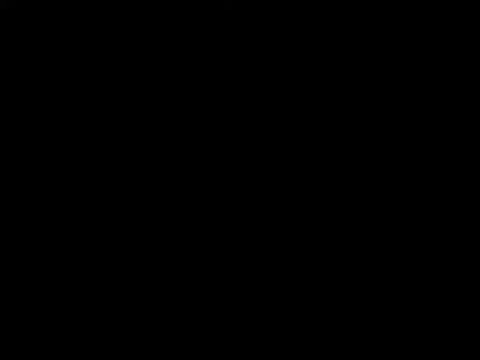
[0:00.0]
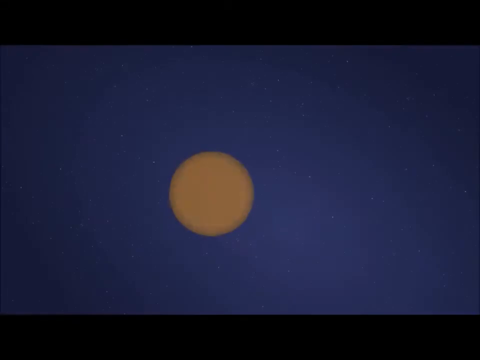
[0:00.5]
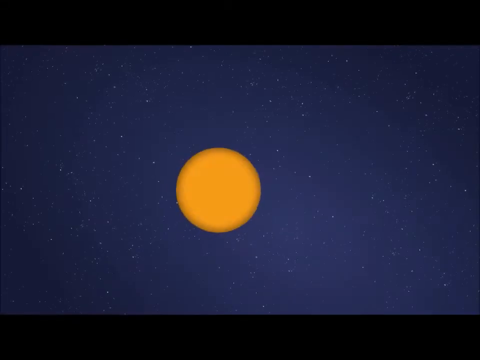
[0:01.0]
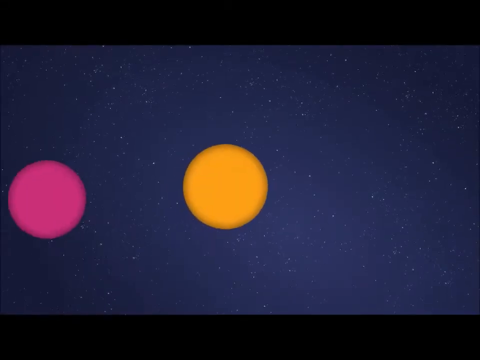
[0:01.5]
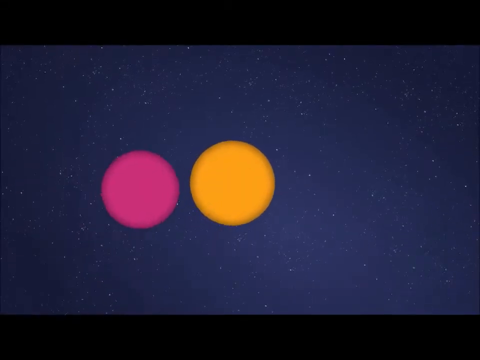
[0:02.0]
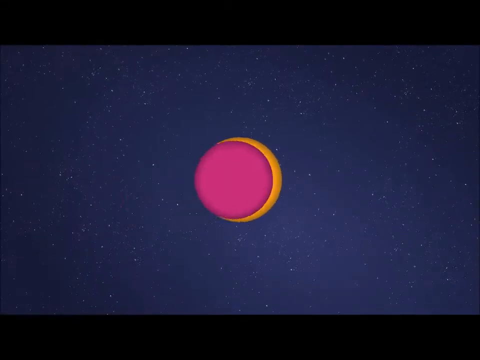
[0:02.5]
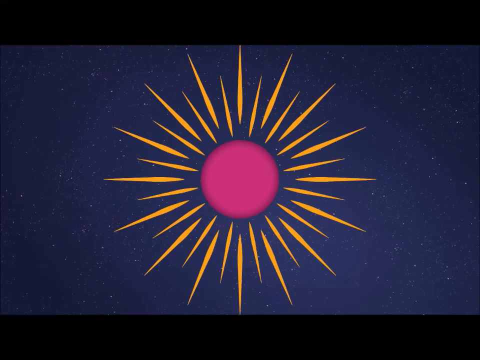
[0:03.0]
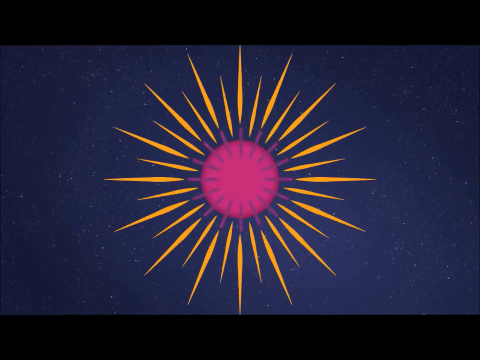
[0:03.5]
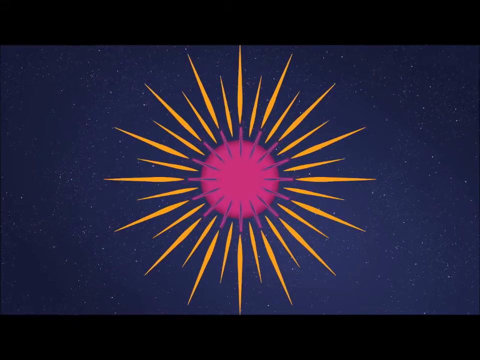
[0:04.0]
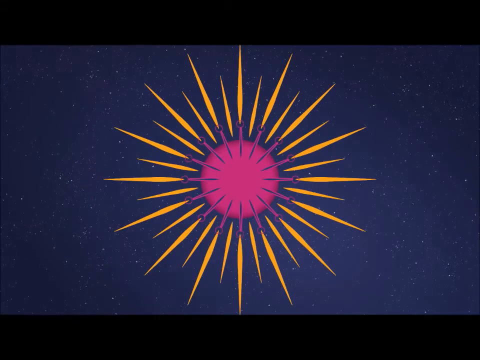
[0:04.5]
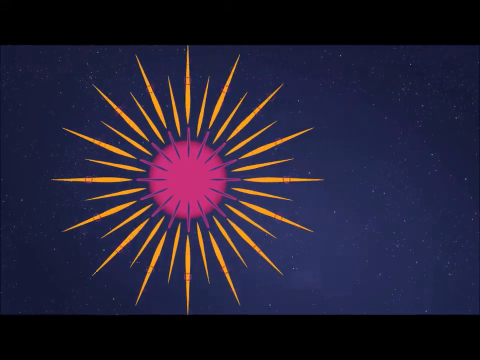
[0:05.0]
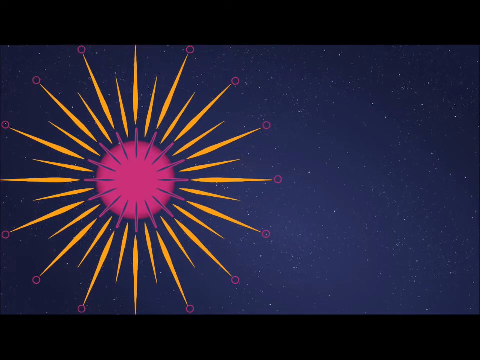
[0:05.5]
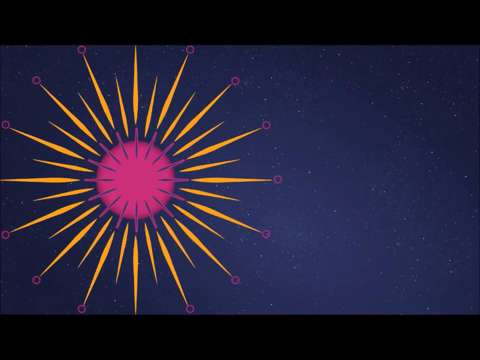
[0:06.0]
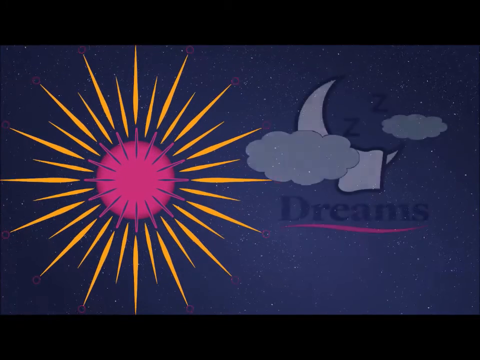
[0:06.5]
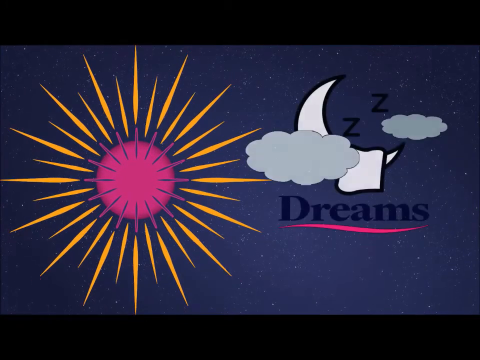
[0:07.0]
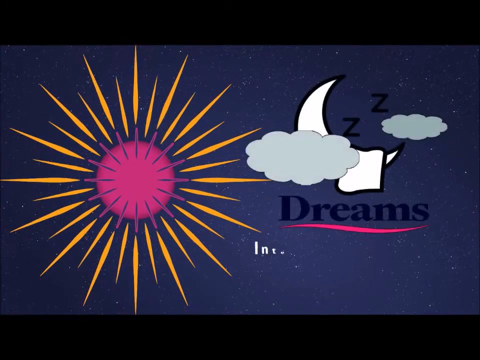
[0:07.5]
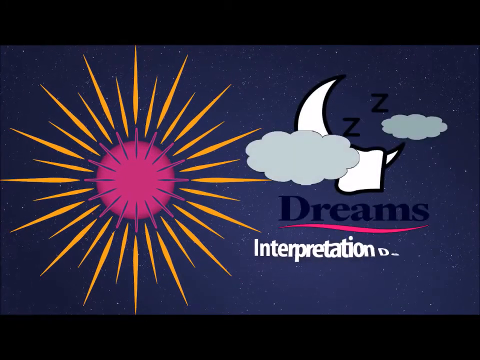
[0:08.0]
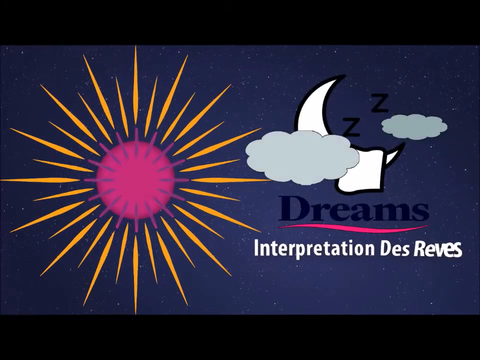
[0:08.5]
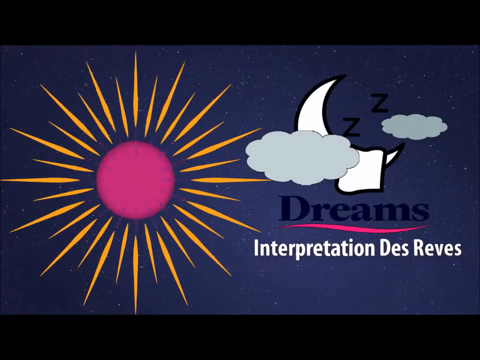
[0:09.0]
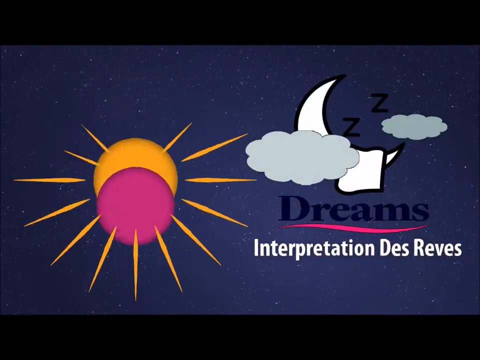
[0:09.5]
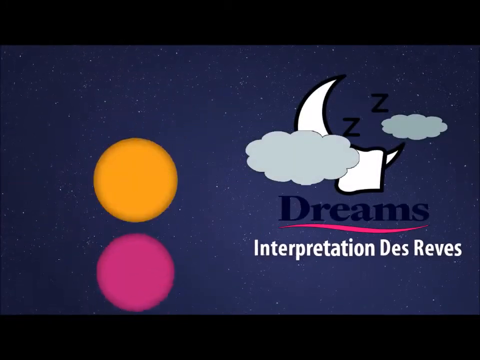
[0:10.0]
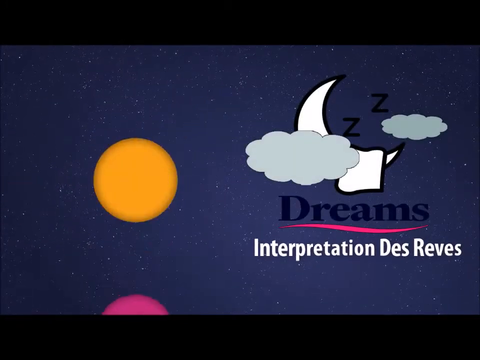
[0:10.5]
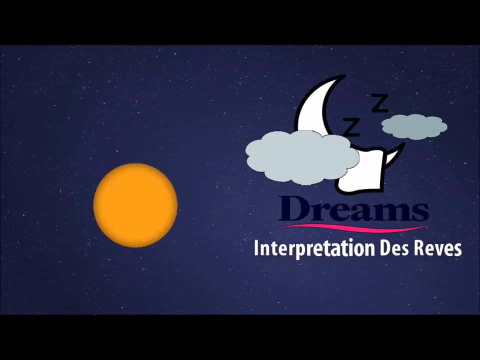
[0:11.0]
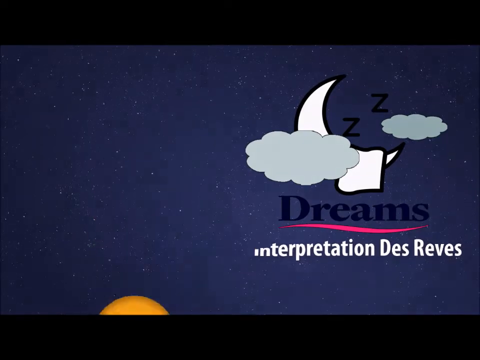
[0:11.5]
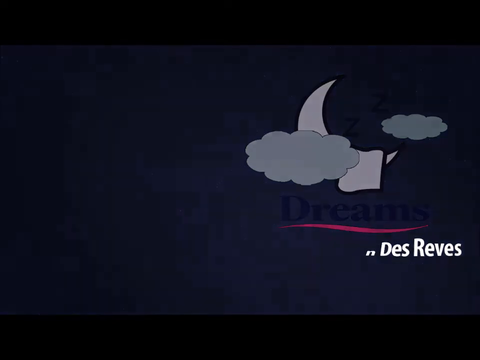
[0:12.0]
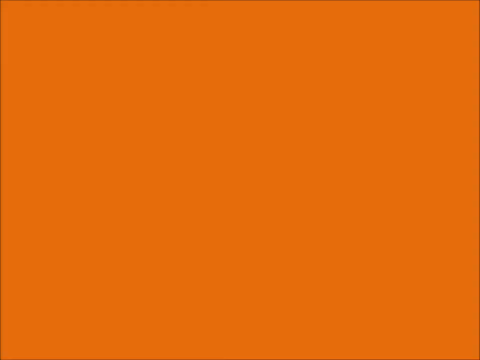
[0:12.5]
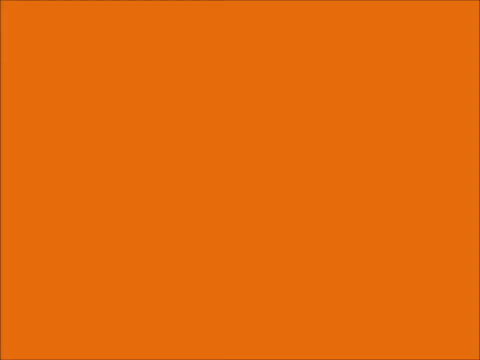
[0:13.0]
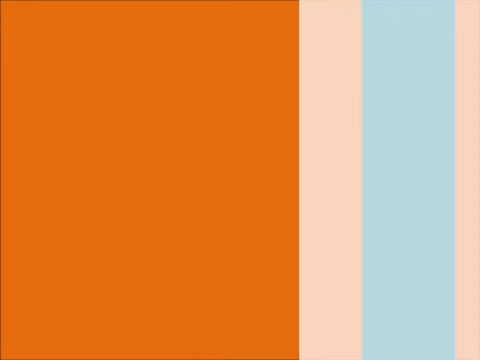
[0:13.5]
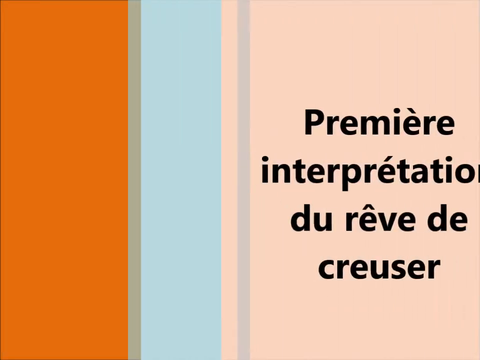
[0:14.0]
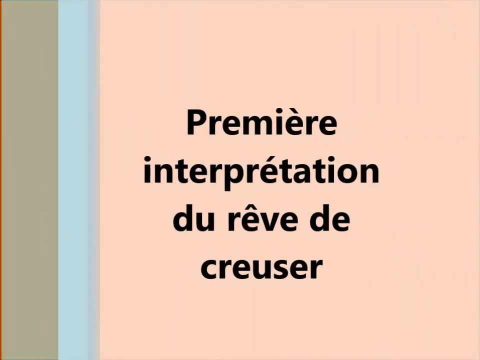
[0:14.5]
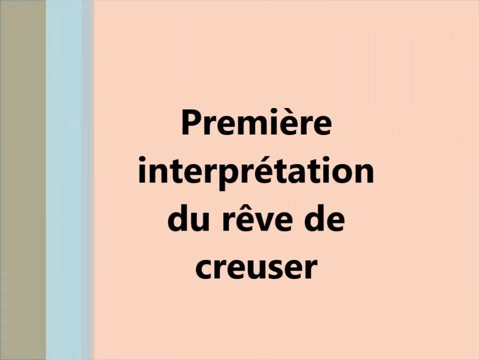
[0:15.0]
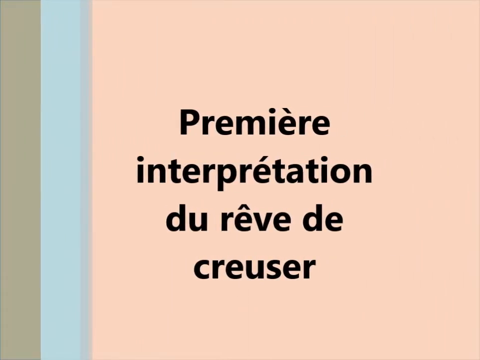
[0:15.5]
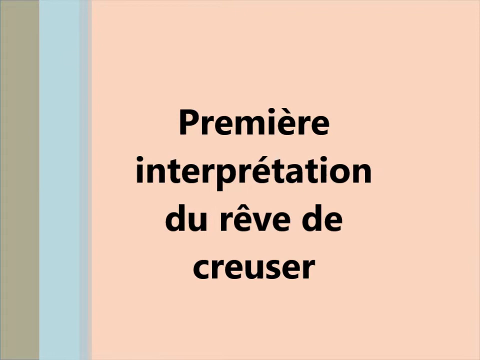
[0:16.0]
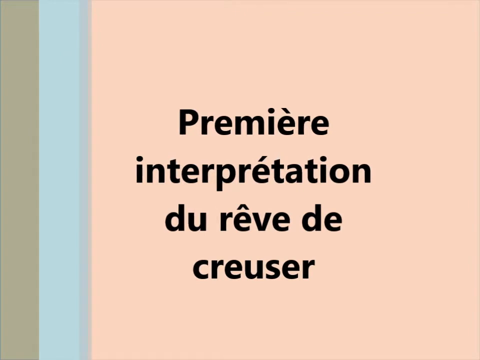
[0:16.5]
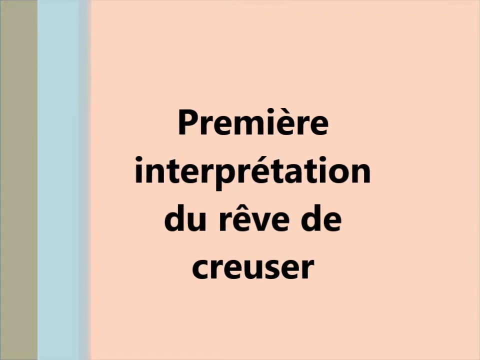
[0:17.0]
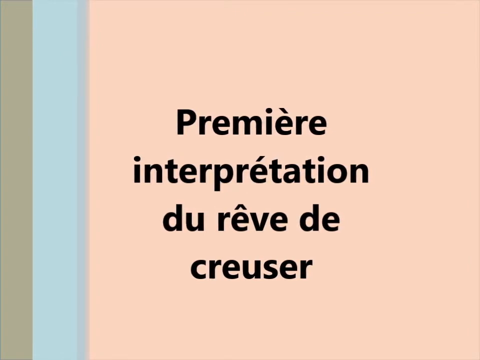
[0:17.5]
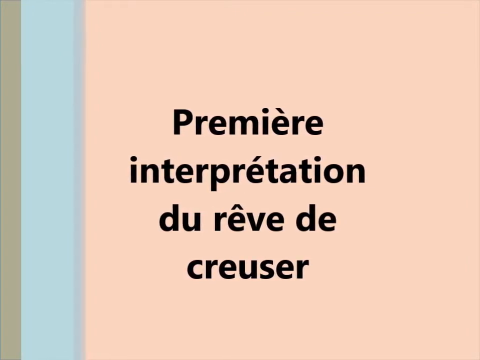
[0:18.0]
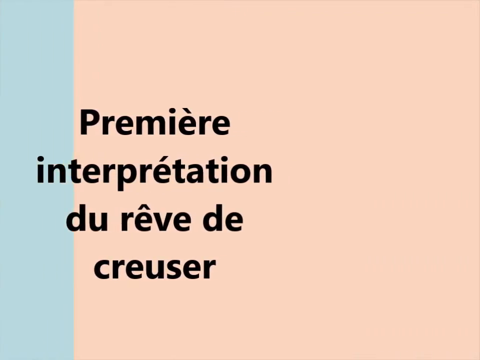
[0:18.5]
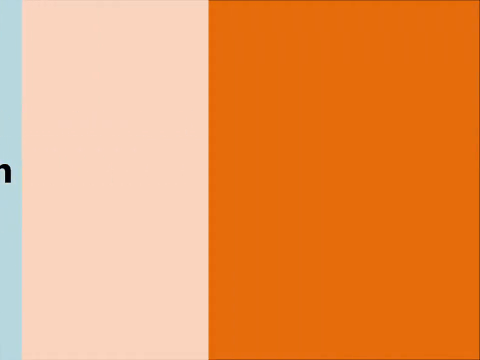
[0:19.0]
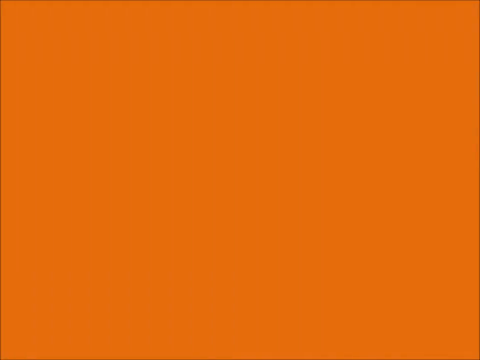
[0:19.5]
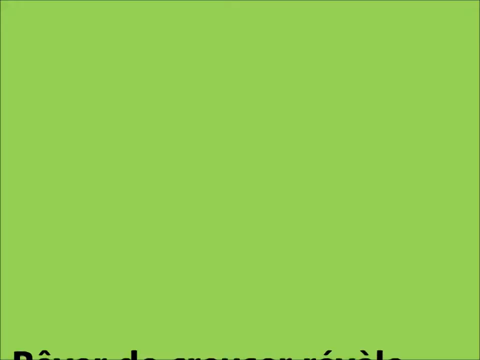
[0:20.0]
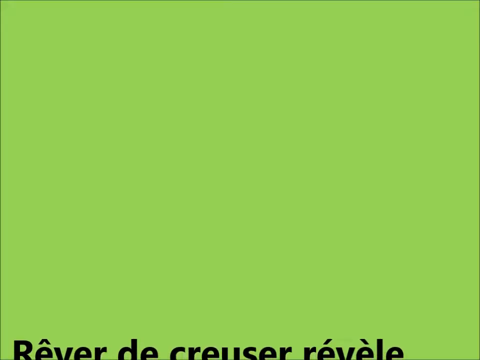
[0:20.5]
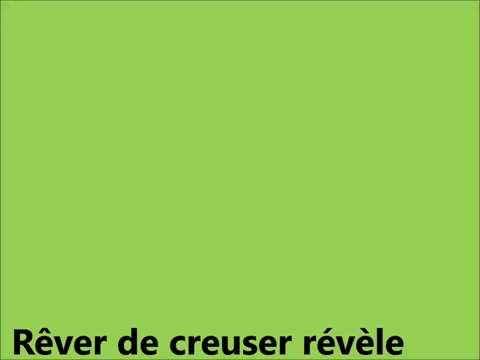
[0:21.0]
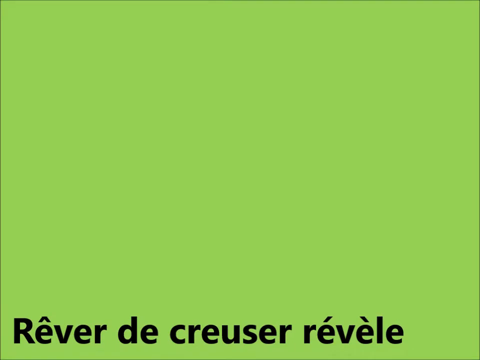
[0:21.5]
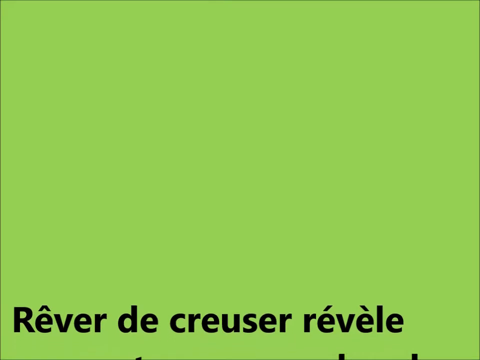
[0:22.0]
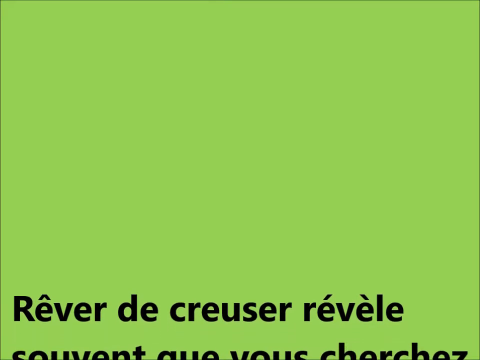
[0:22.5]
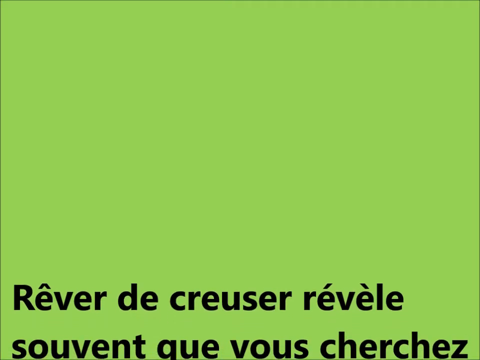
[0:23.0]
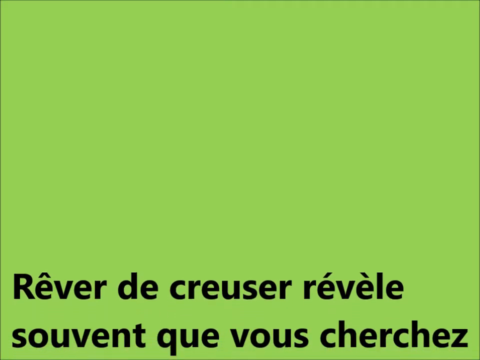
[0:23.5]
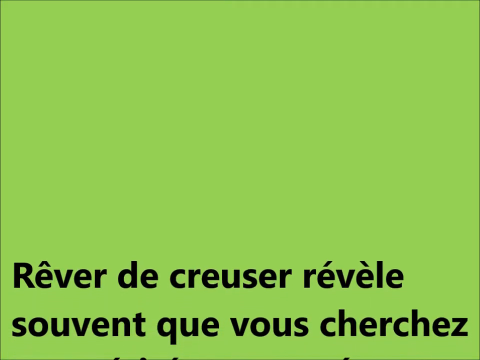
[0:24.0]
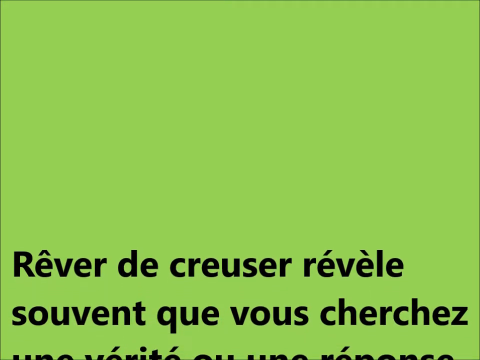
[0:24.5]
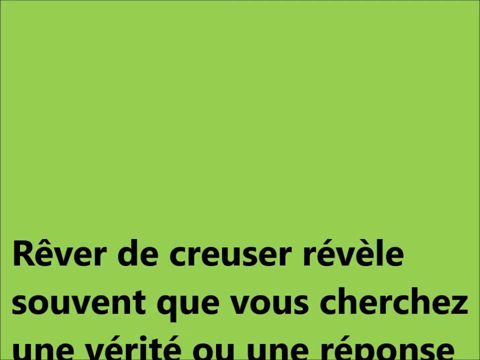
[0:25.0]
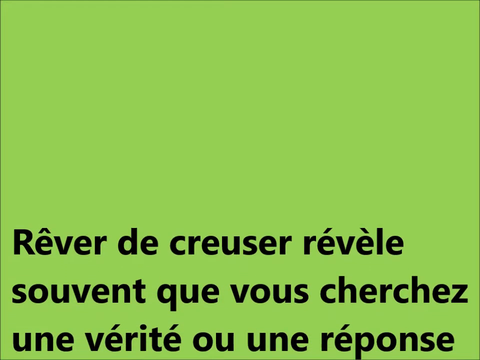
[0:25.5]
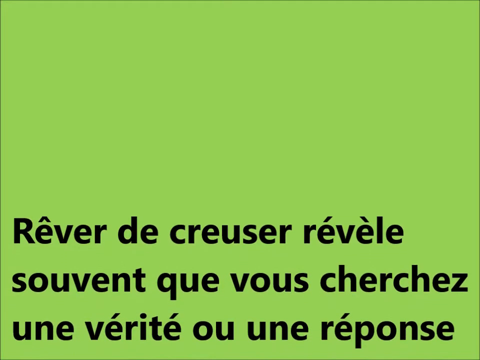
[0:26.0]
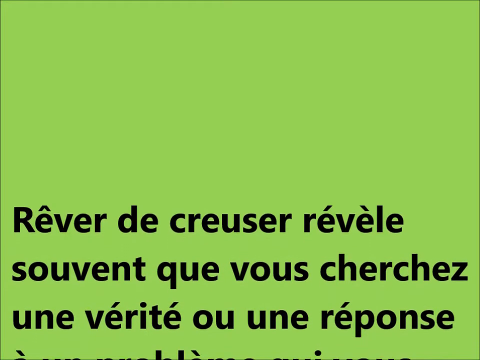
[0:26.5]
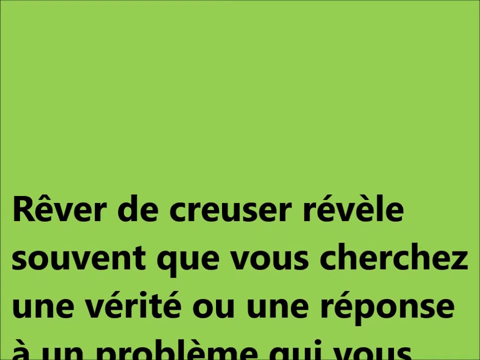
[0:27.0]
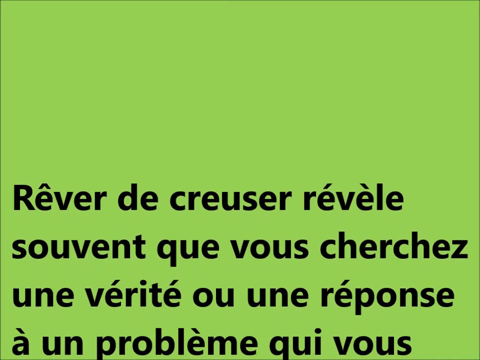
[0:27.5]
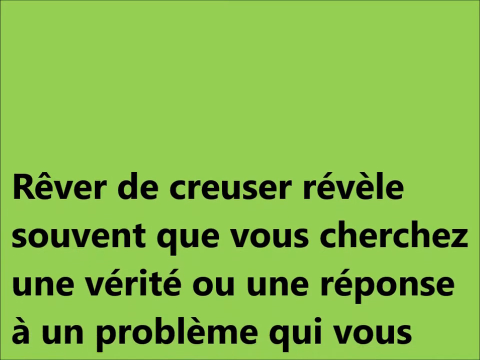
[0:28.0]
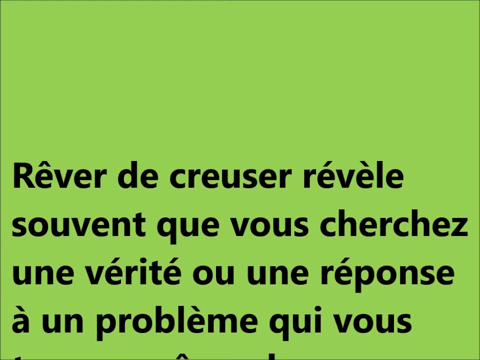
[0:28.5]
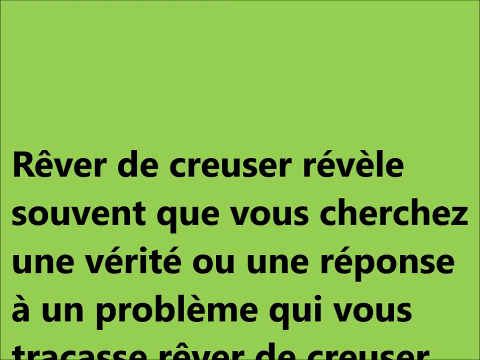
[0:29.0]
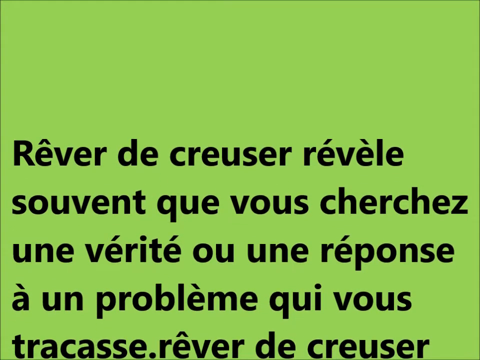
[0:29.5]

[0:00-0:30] The video, which is in French, concerns the interpretation of dreams. It opens on the moon in the night sky, which then kind of explodes into a kaleidoscopic effect. Next, a crescent moon behind a cloud, with another cloud in the background, has the letters Z and Z coming out of it. Below the crescent moon is the word "dreams", and below that is French text translating to "interpretation of dreams". After this opening screen of the moon and titles, a sliding effect leads to the text "Premier interpretation du rêve de creuser" appearing on the screen.